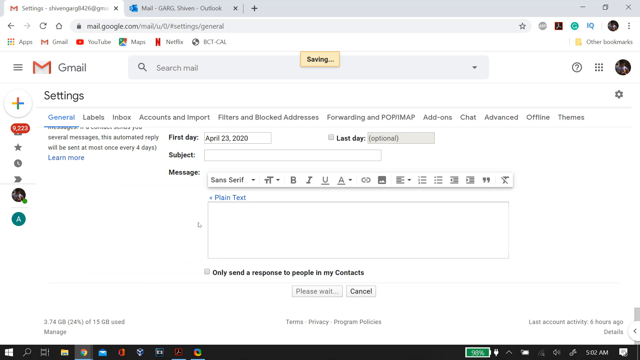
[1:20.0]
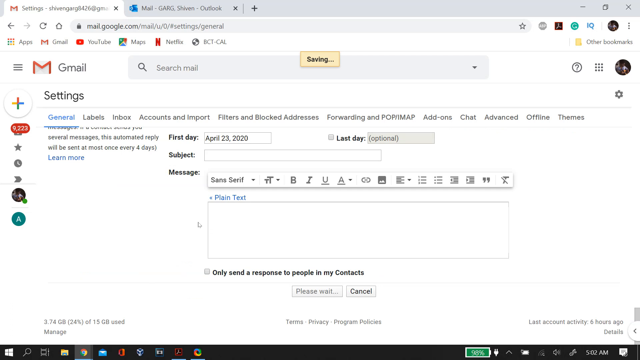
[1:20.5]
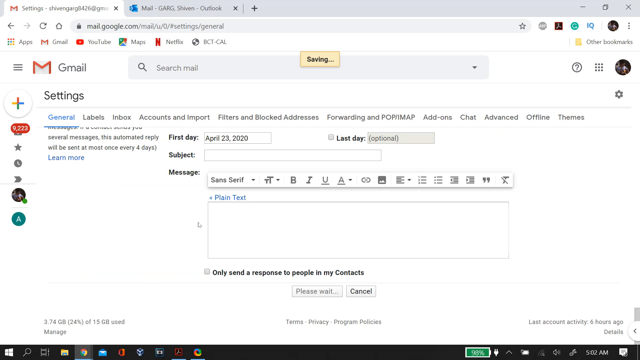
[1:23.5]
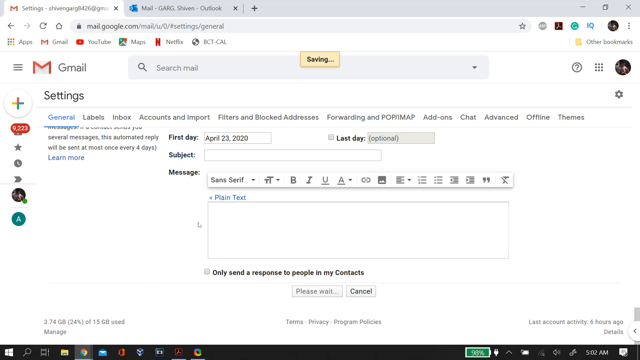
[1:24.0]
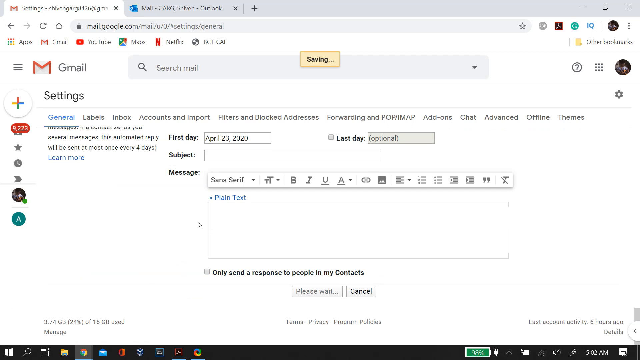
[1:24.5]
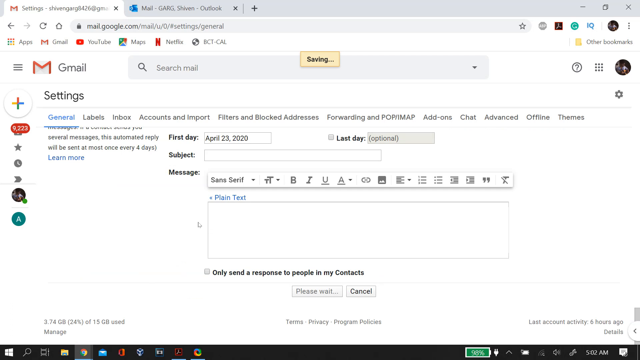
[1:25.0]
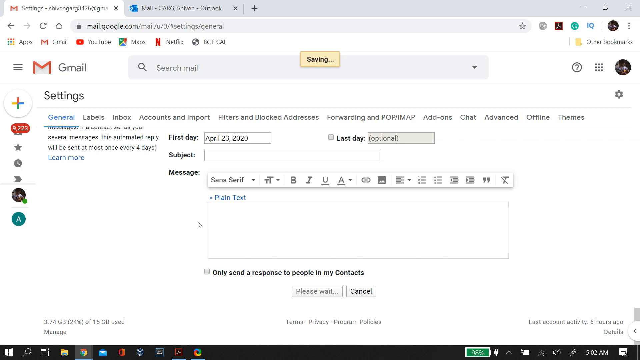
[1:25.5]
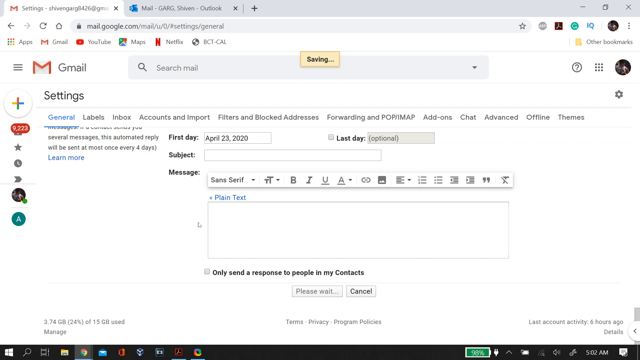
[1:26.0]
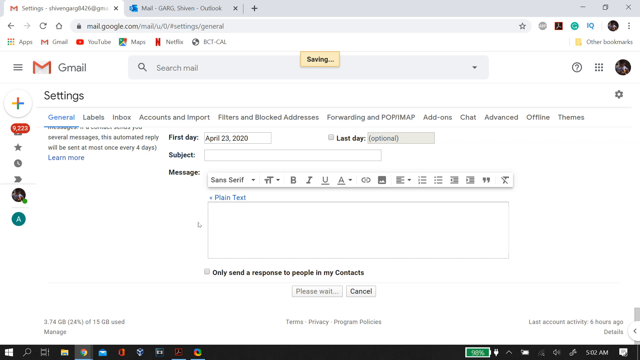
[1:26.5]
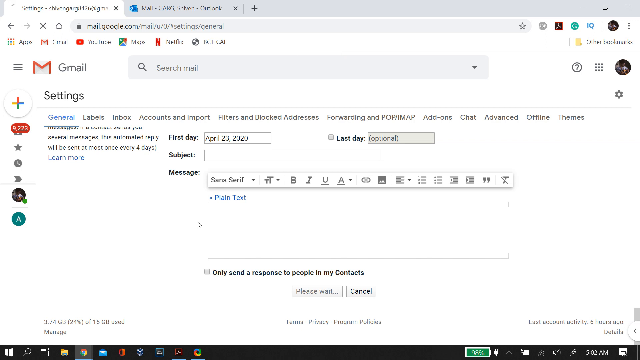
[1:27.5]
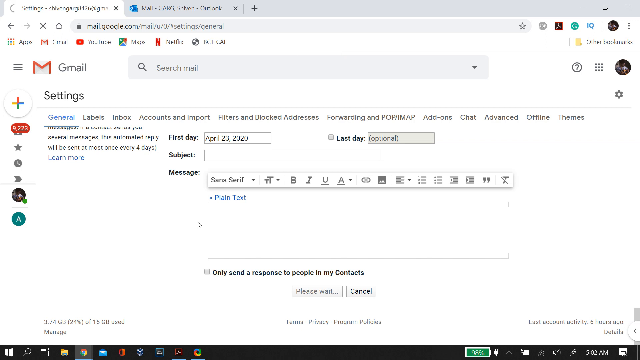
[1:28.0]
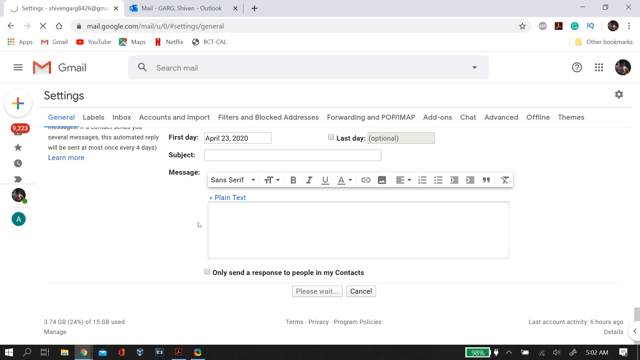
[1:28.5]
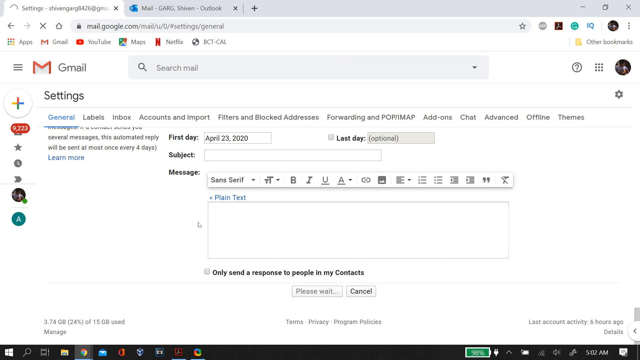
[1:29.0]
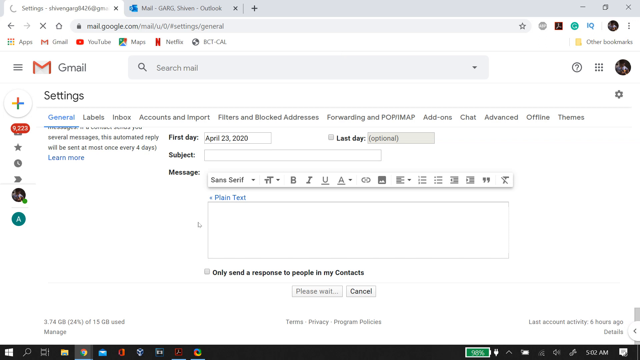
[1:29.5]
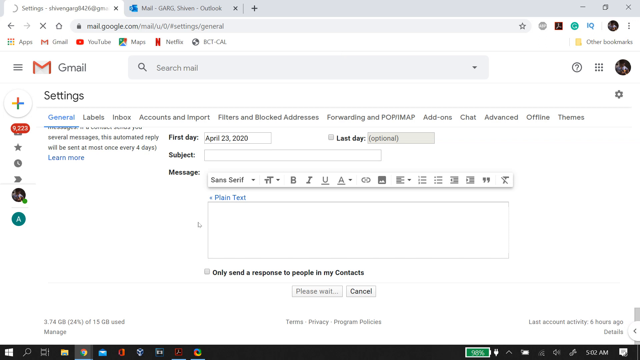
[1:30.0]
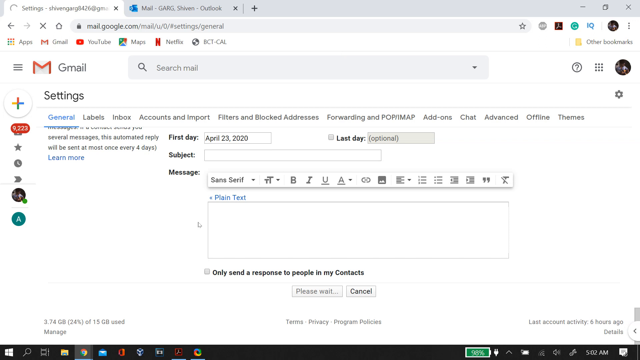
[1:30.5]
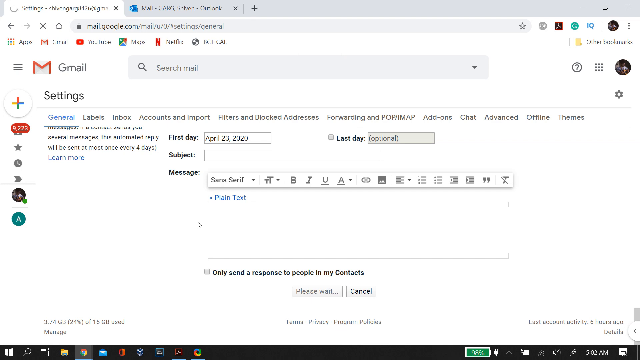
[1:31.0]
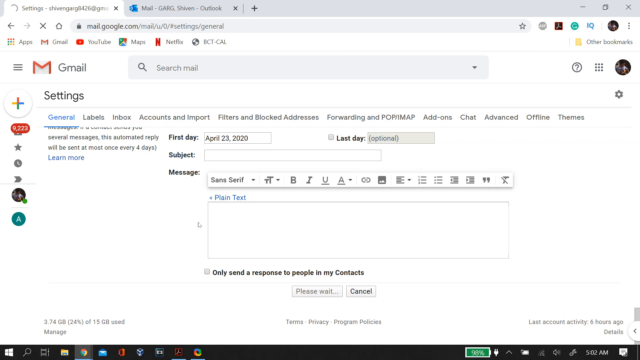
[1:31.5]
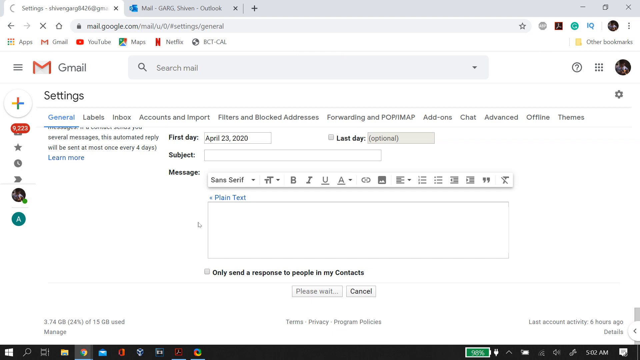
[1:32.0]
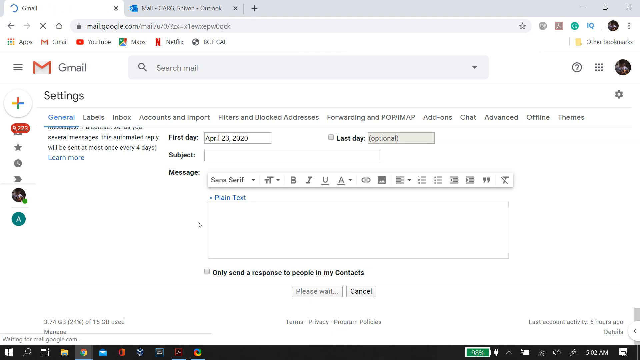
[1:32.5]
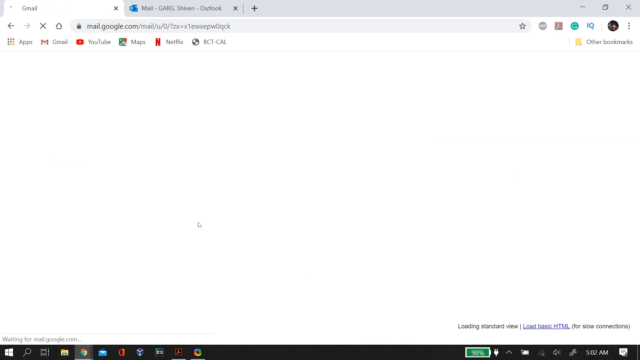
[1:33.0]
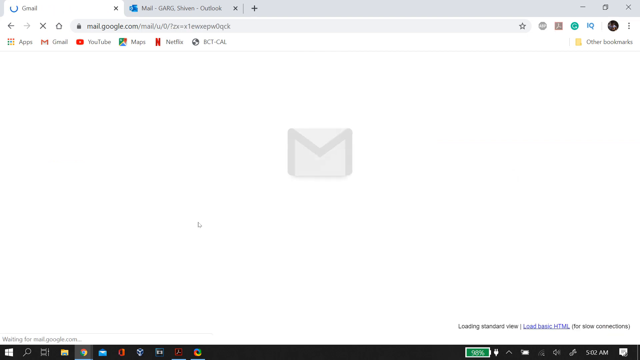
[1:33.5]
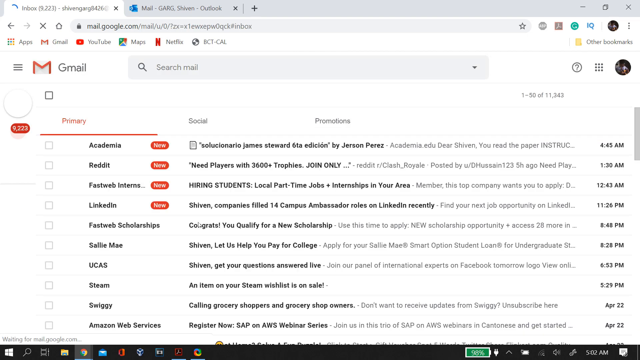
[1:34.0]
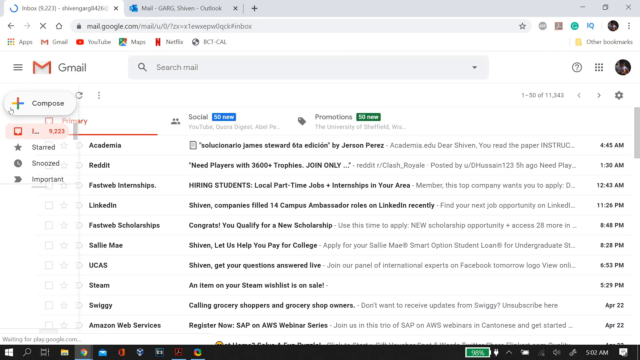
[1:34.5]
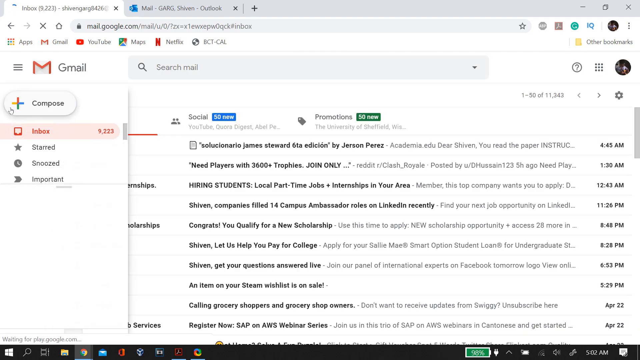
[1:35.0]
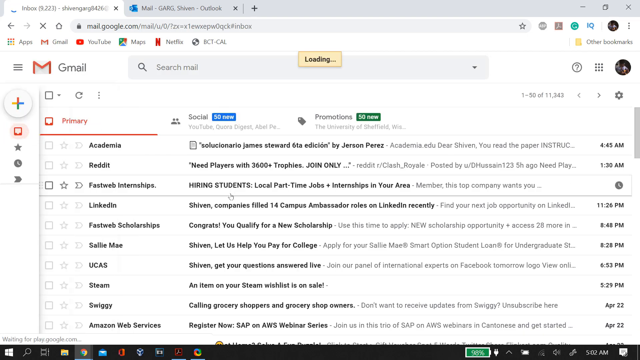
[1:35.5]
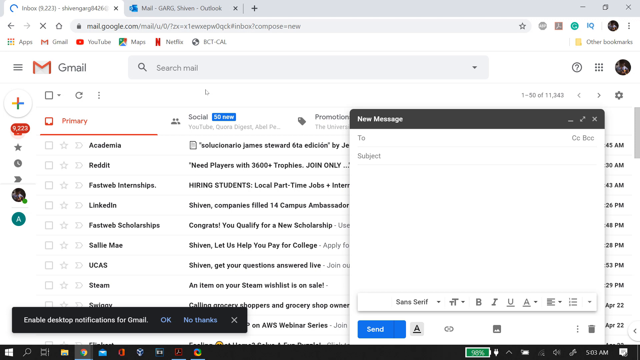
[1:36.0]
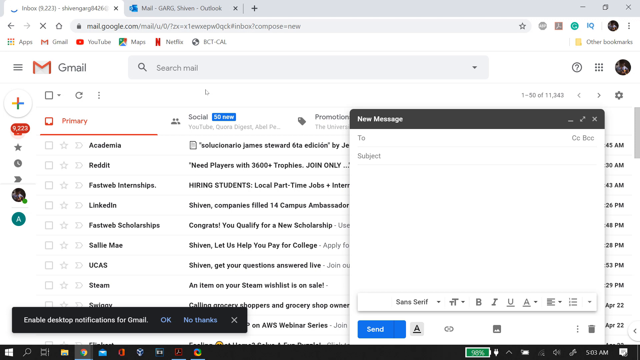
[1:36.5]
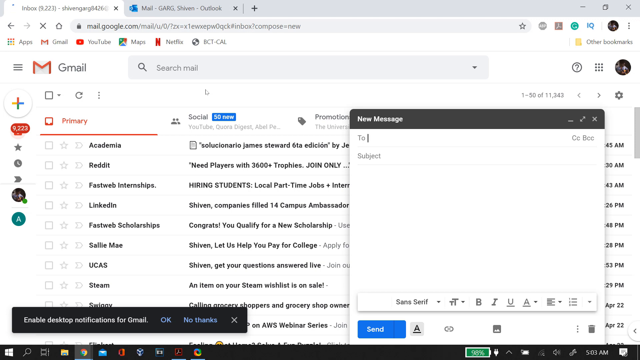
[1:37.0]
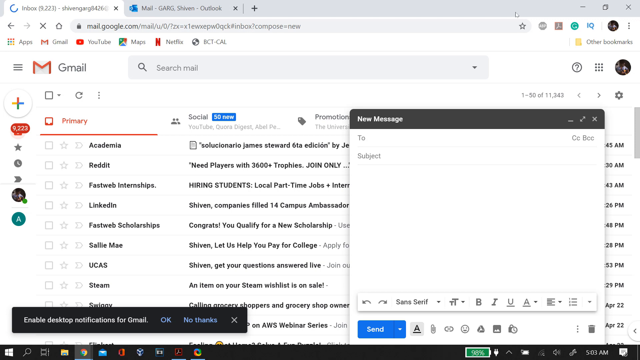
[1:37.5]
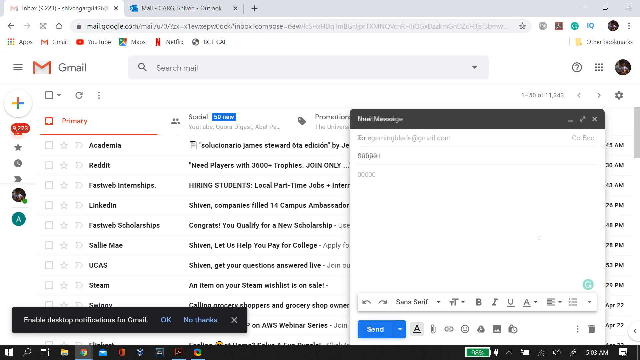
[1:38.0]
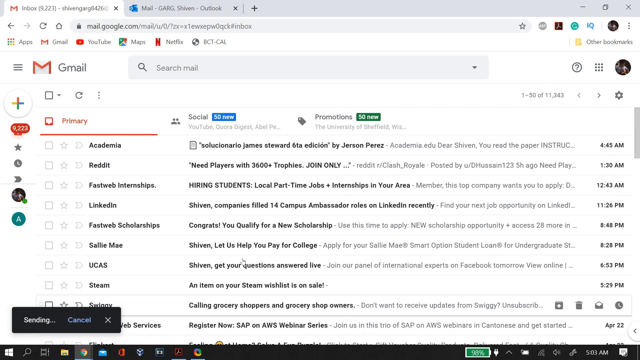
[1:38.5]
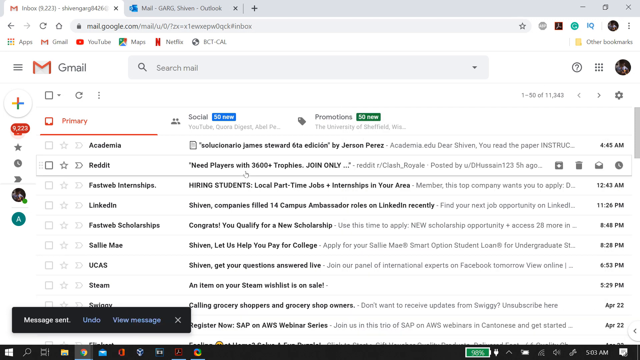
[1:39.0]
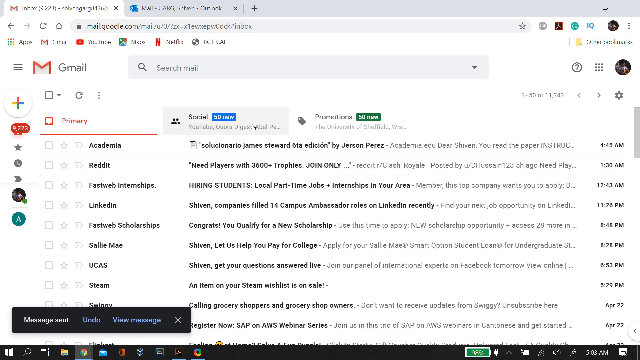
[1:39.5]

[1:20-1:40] After a few seconds the changes are saved successfully and the user is sent back to the Gmail inbox seen earlier. The user clicks the plus button on the left to create a new message. The new message box asks for a recipient and a title, but the user seems to close it without writing anything and explores the inbox a little more without doing anything specific. The video seems to be a tutorial with tips to enhance the Gmail experience, one of them being increasing the Undo Send time.